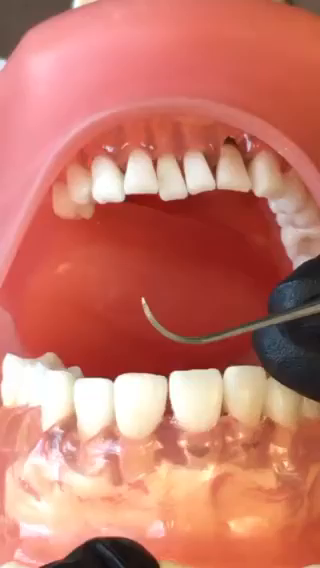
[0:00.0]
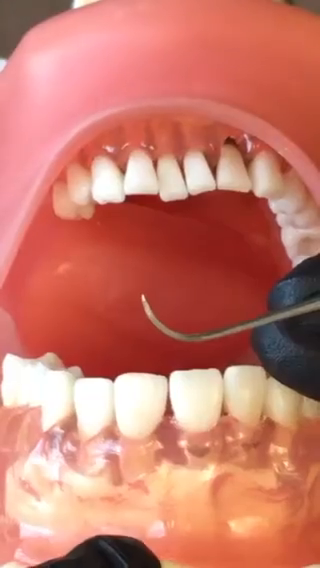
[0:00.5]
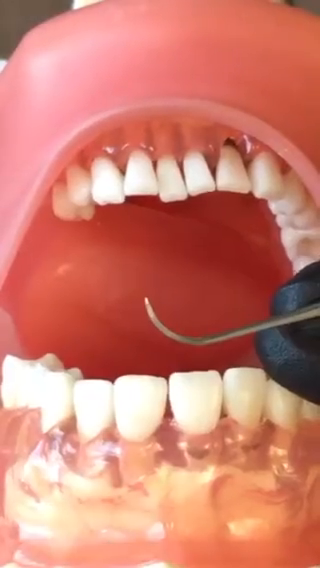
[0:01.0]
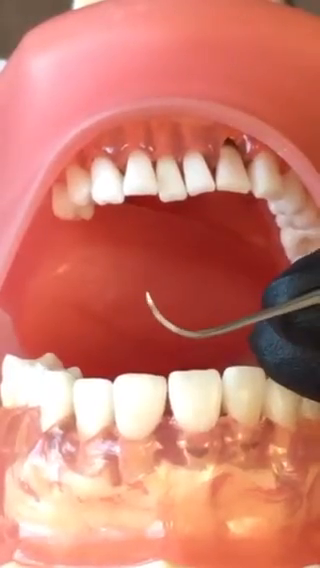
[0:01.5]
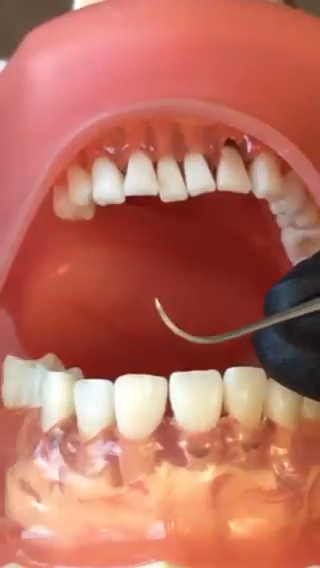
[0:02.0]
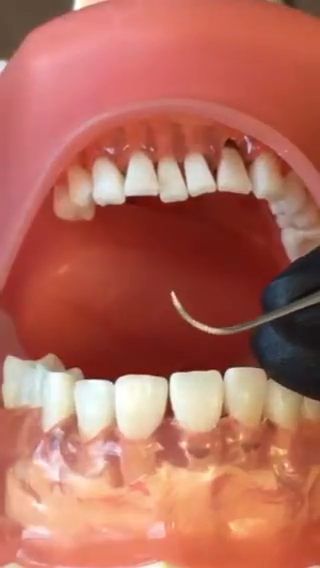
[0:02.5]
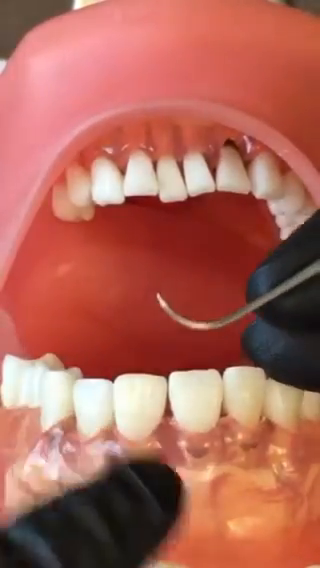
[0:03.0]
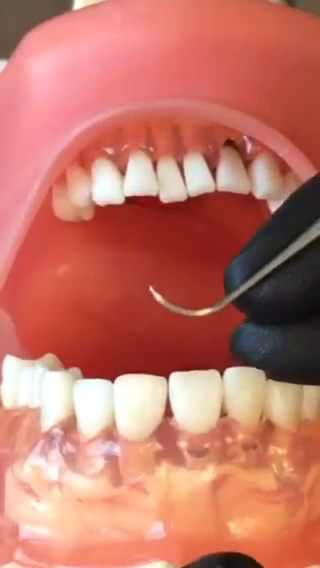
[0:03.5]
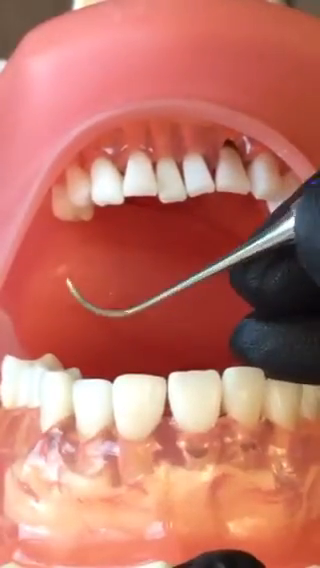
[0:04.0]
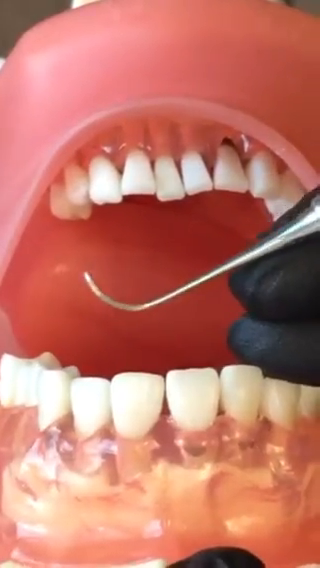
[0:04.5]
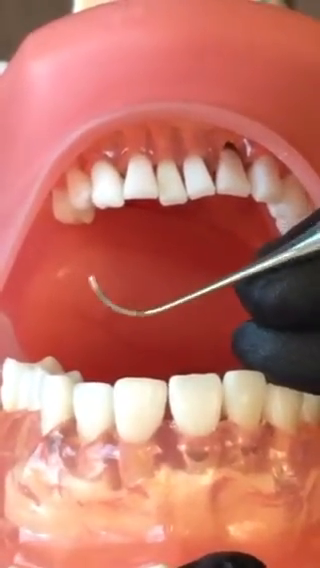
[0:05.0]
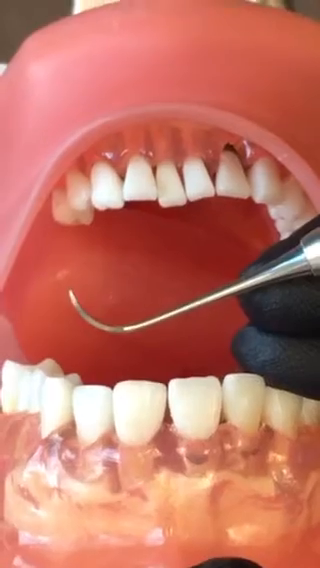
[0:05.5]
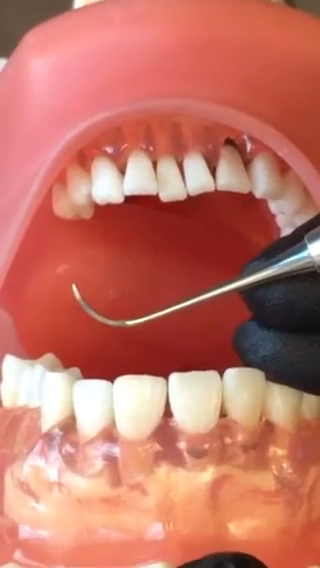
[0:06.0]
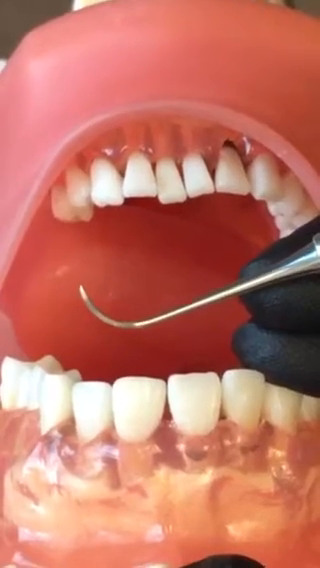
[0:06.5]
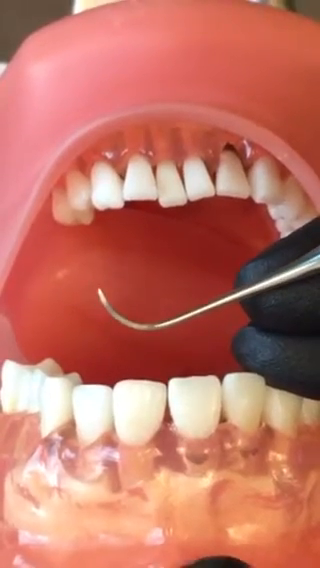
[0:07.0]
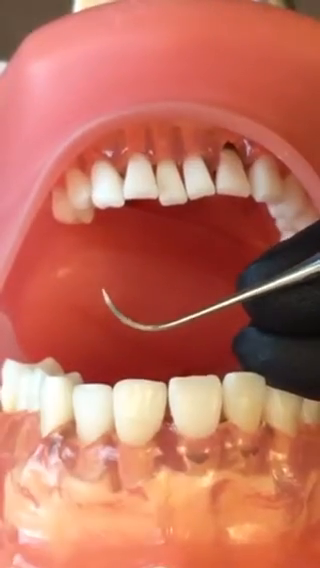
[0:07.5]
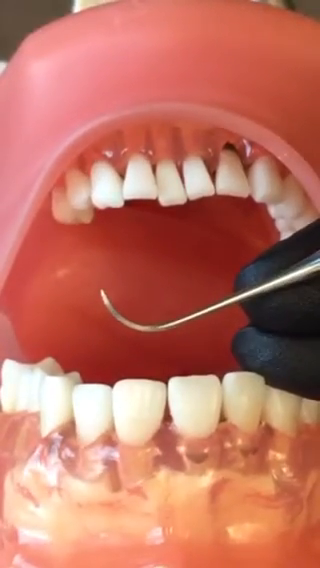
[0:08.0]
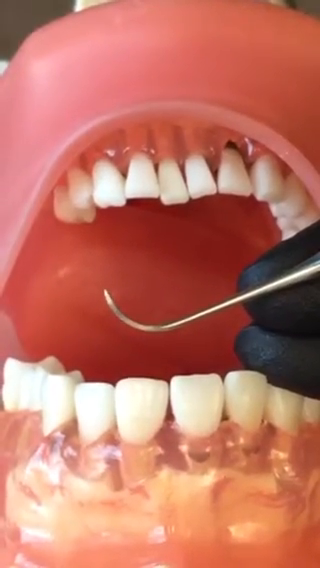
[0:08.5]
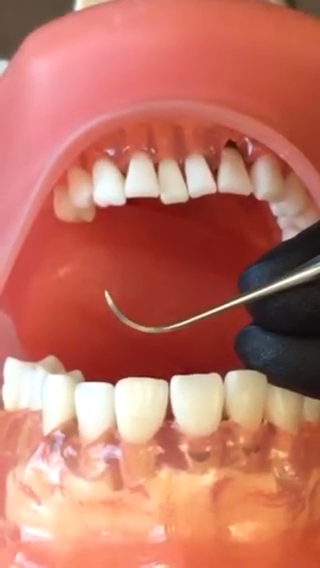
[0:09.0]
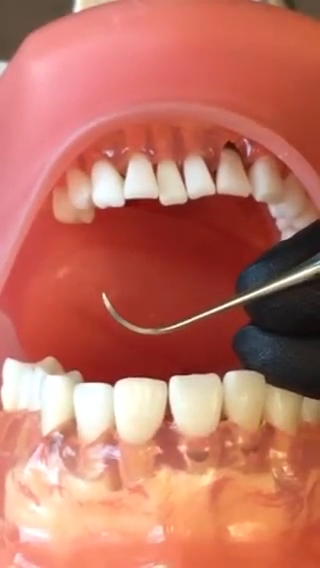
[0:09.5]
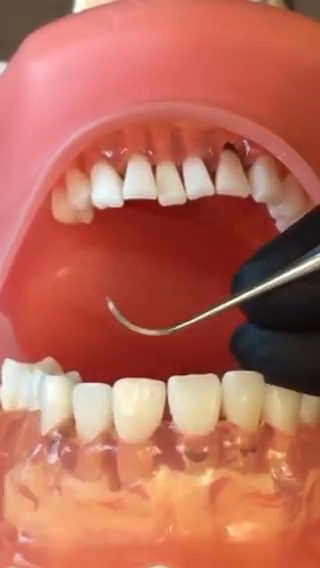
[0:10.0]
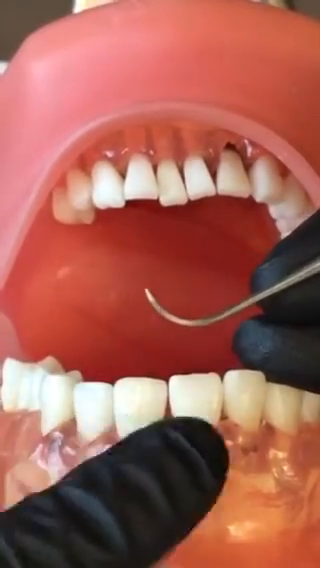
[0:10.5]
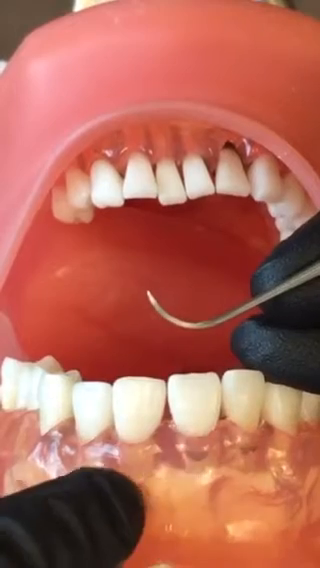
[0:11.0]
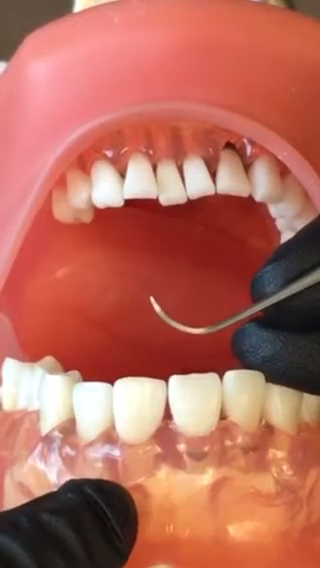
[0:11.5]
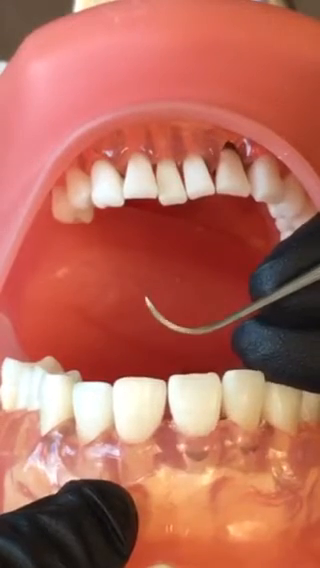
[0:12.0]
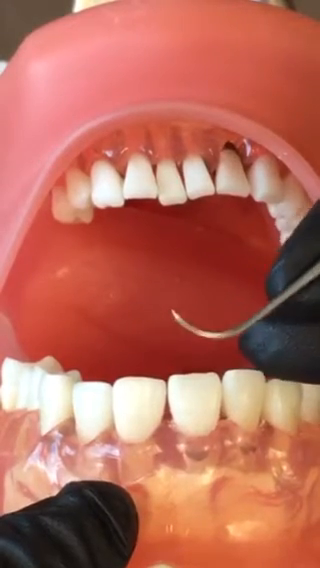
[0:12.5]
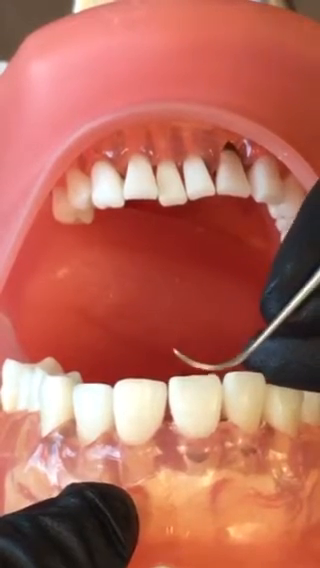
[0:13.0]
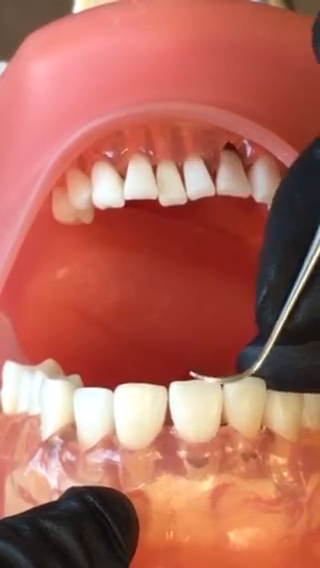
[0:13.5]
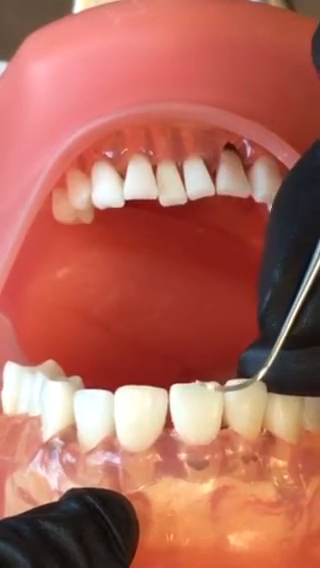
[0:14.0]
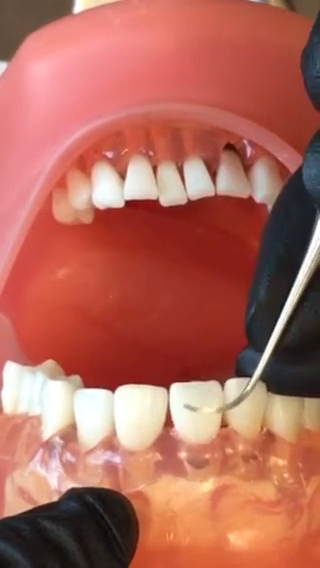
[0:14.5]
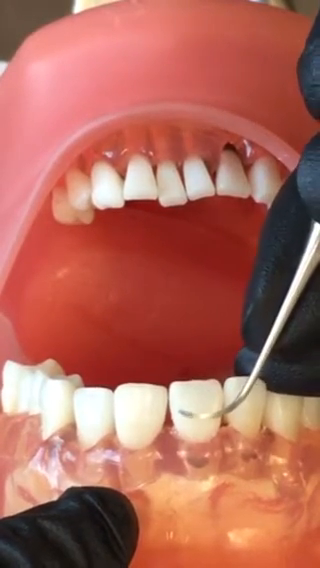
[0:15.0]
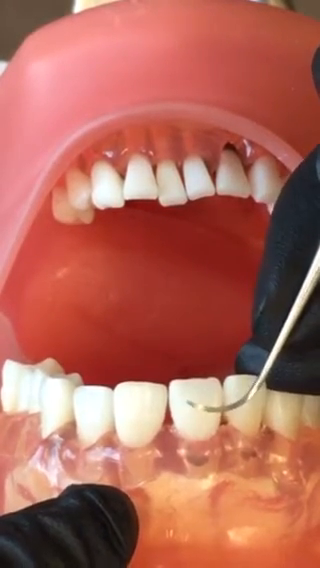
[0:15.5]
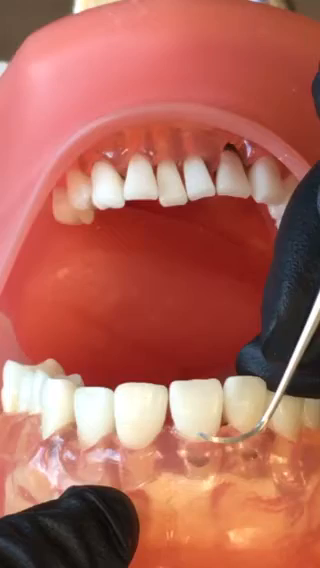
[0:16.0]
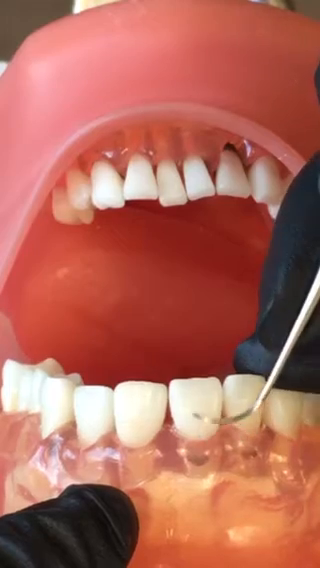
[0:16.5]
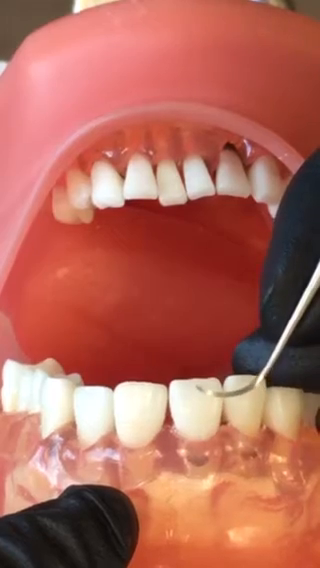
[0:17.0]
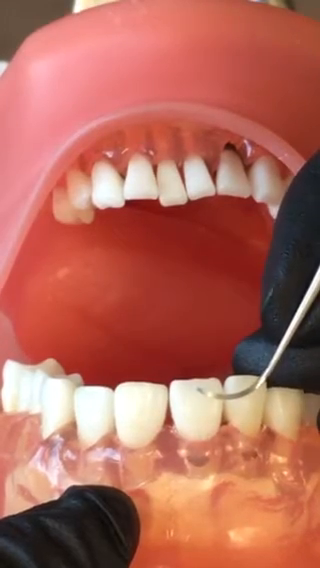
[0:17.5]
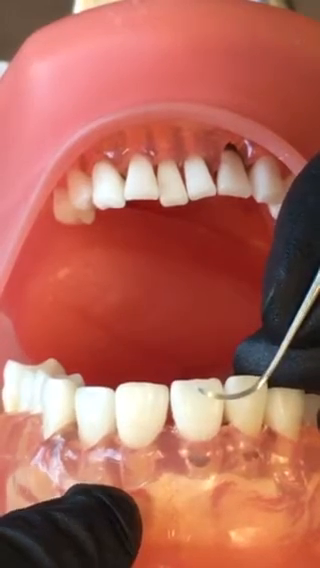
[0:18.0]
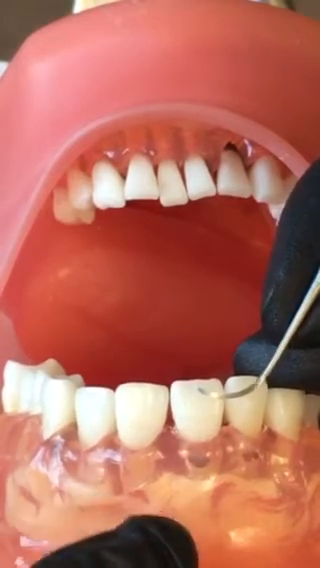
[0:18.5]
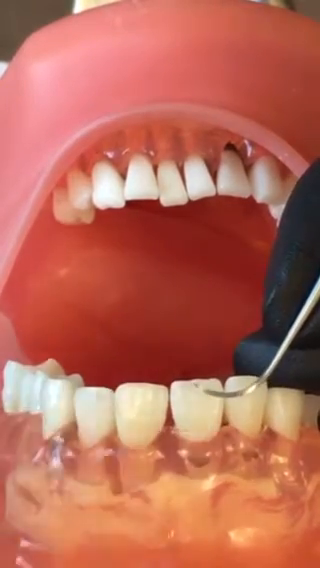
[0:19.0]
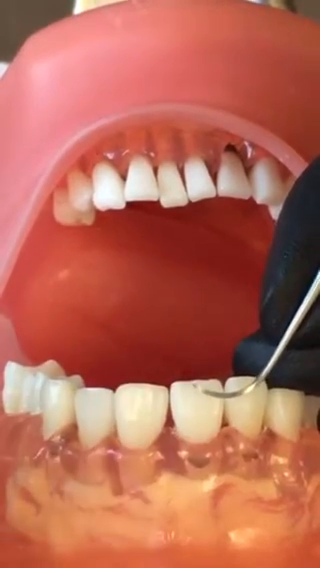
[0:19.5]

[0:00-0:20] This appears to be a dental school tutorial, seemingly on how to clean teeth. It is unclear whether the mouth is real or a training model, but it is apparently a training model mouth for dental students. The mouth is wide open, with two full sets of teeth at the top and at the bottom. The angle is upside down, so the top row of teeth appears at the bottom of the video and the bottom row of teeth appears at the top. The black-gloved hands of the dental student or instructor hold a long, curved steel dental tool that looks like a scraper for cleaning teeth. It has not been used yet; it is just over the open mouth.